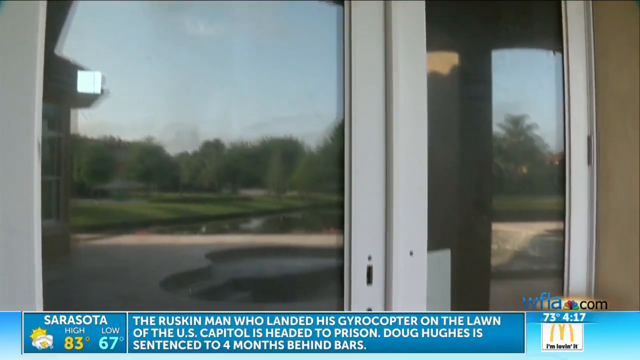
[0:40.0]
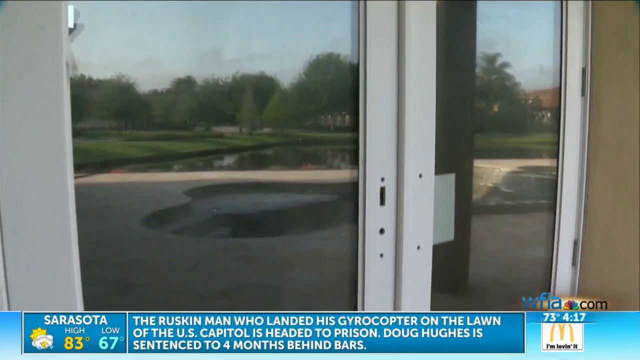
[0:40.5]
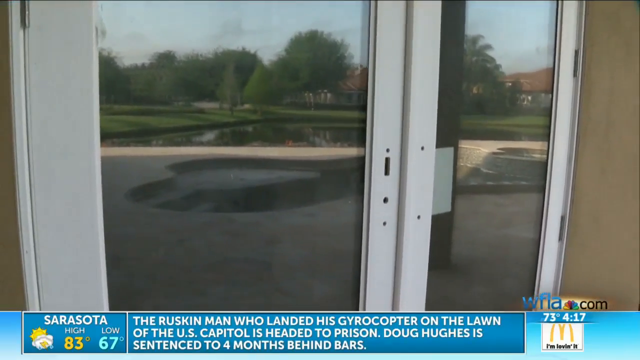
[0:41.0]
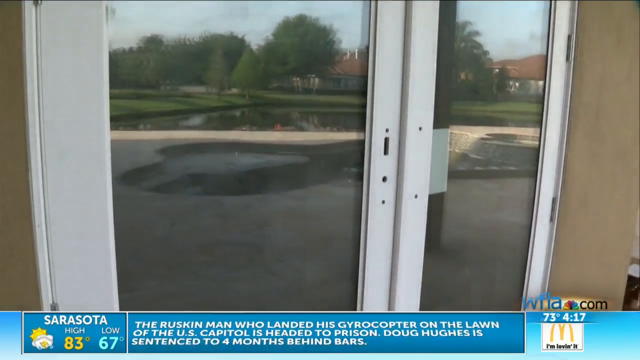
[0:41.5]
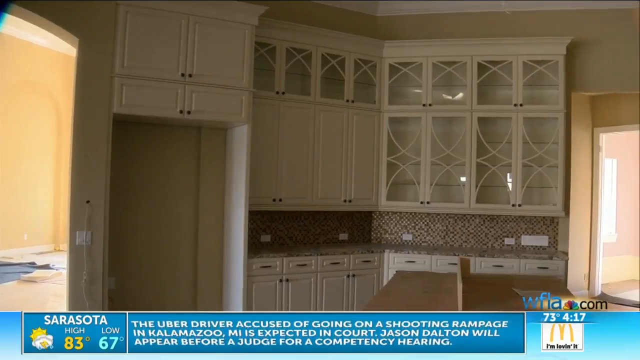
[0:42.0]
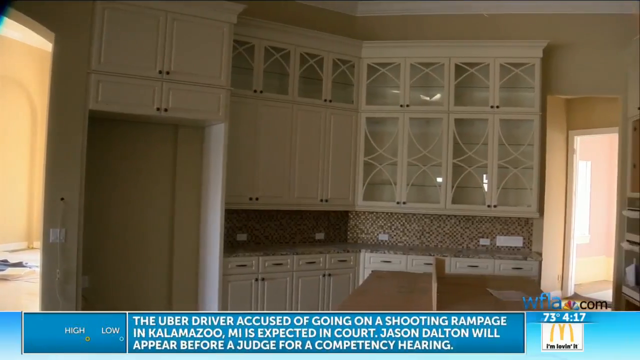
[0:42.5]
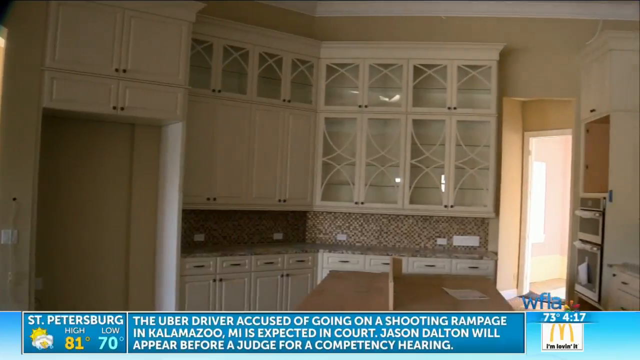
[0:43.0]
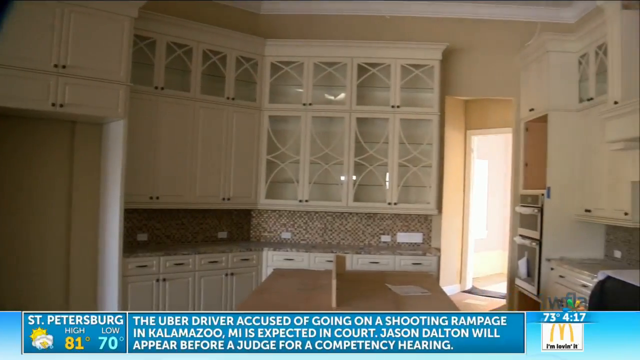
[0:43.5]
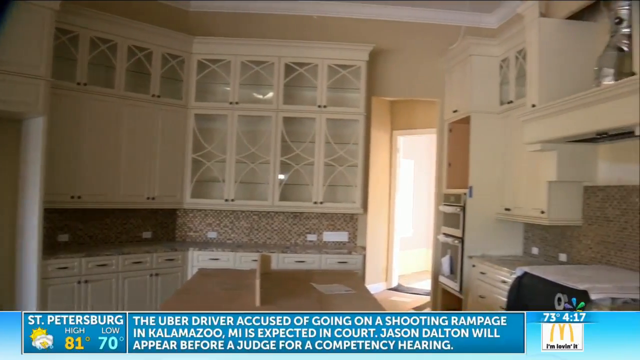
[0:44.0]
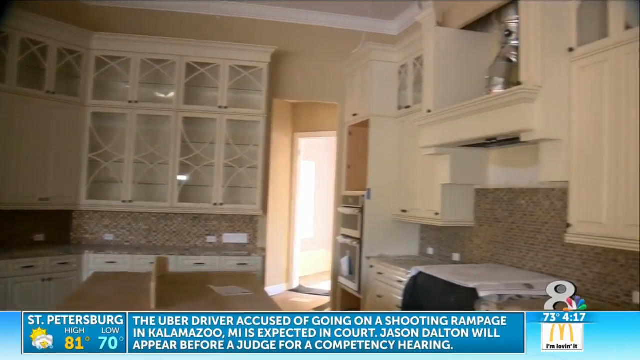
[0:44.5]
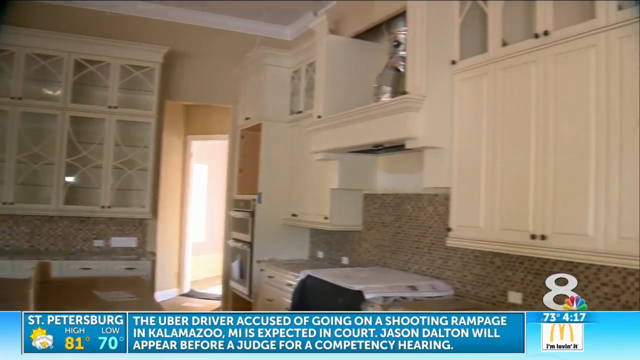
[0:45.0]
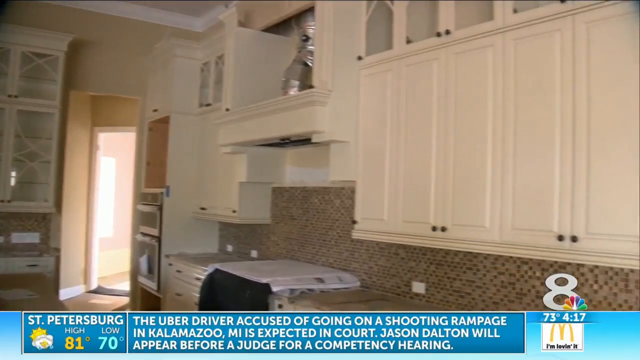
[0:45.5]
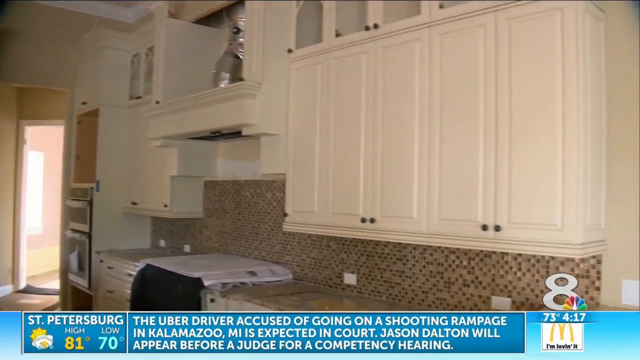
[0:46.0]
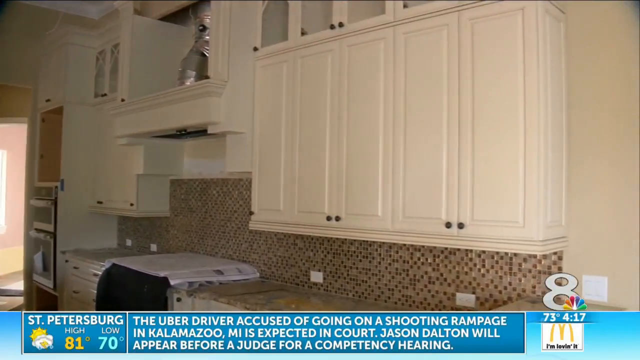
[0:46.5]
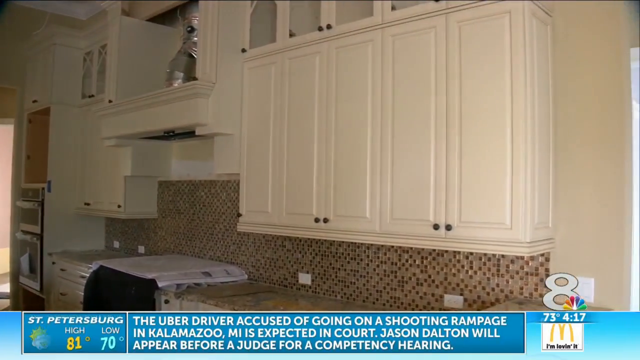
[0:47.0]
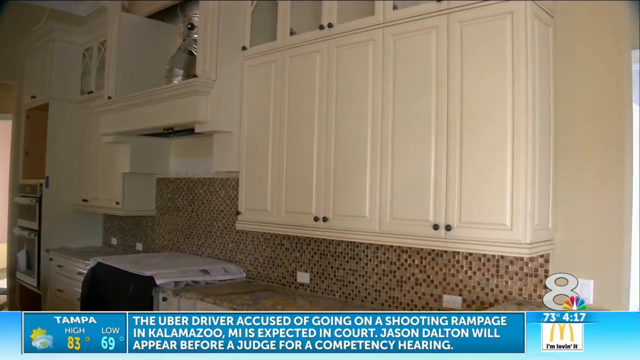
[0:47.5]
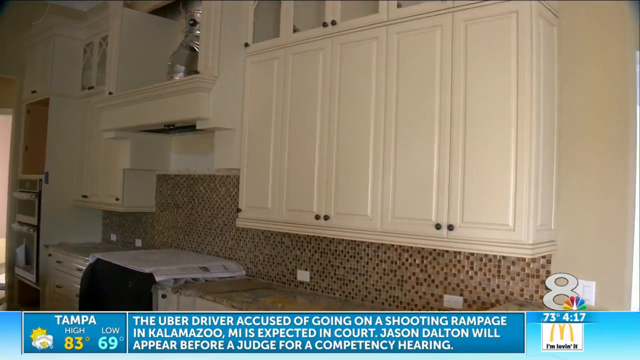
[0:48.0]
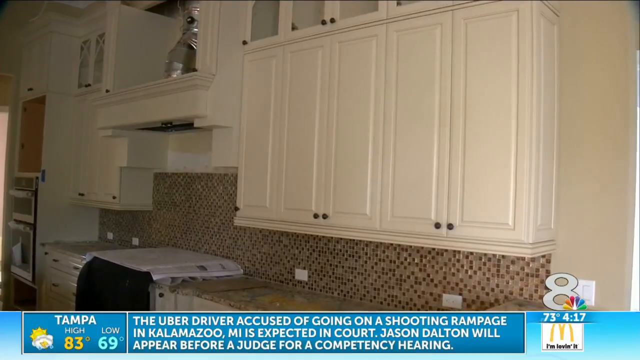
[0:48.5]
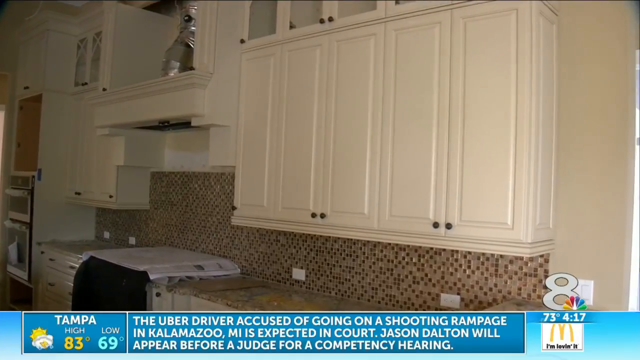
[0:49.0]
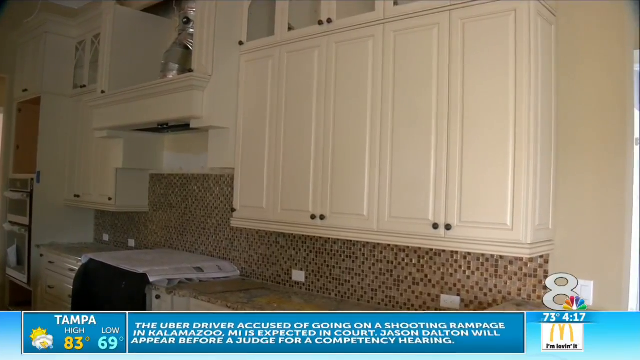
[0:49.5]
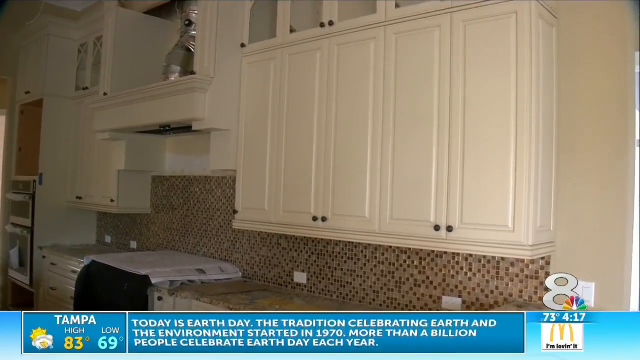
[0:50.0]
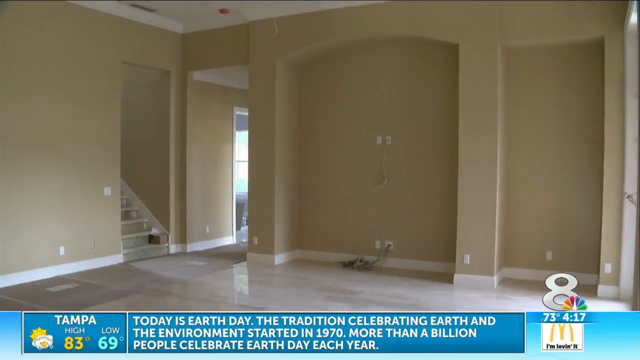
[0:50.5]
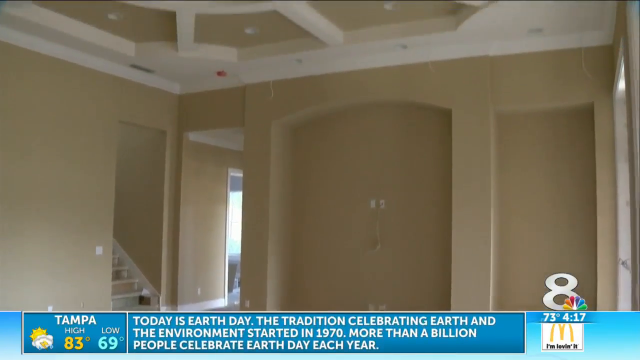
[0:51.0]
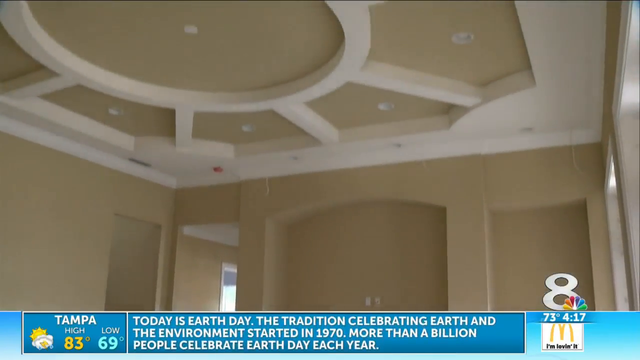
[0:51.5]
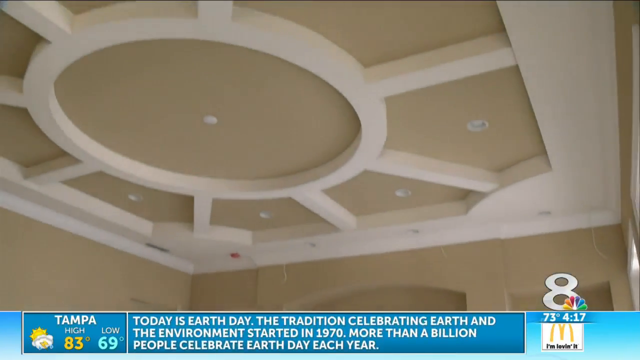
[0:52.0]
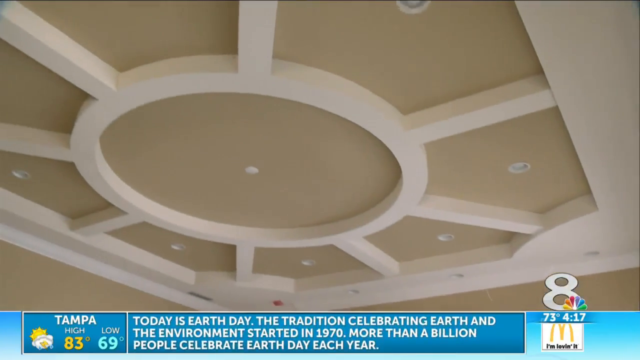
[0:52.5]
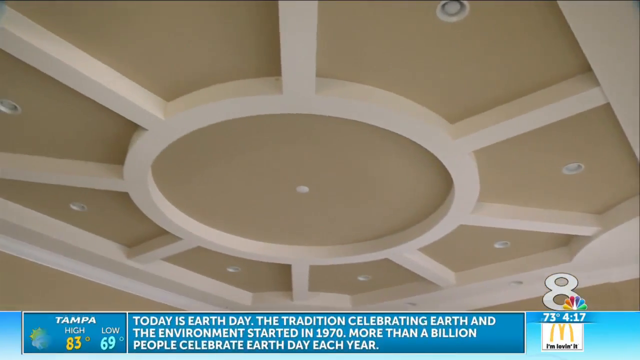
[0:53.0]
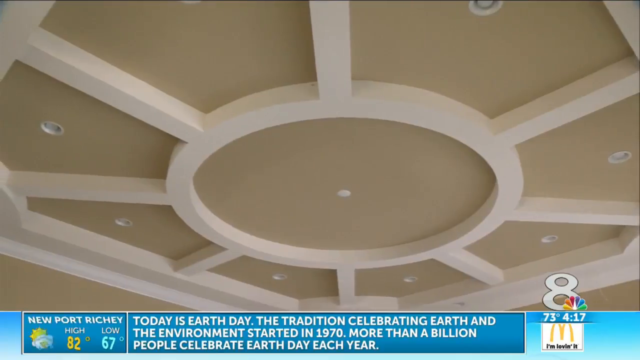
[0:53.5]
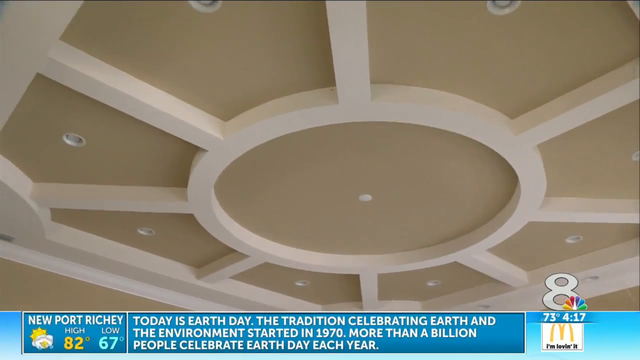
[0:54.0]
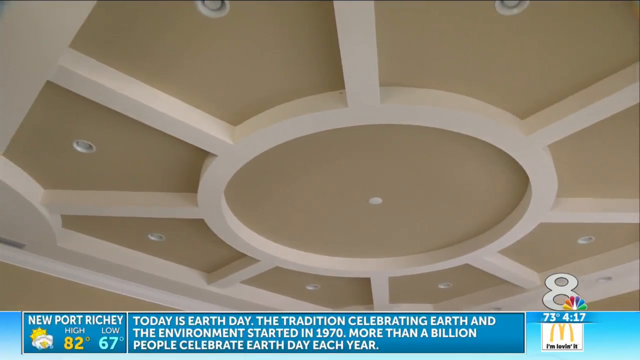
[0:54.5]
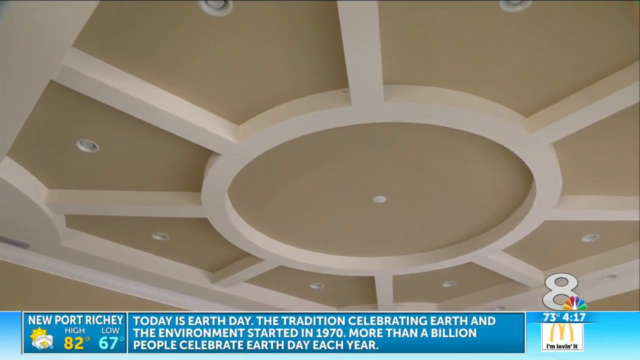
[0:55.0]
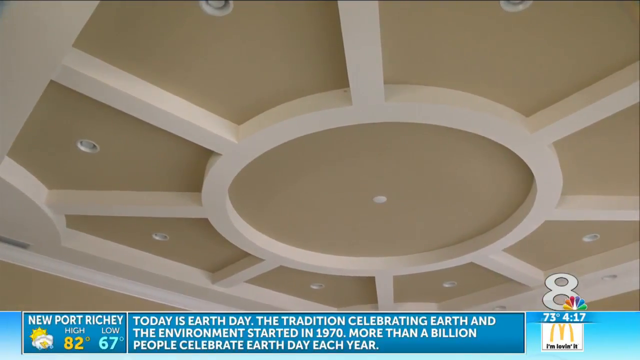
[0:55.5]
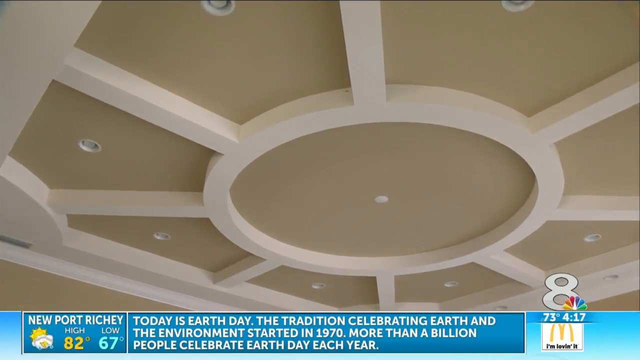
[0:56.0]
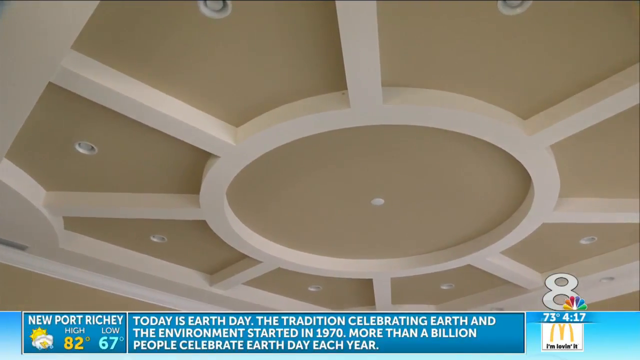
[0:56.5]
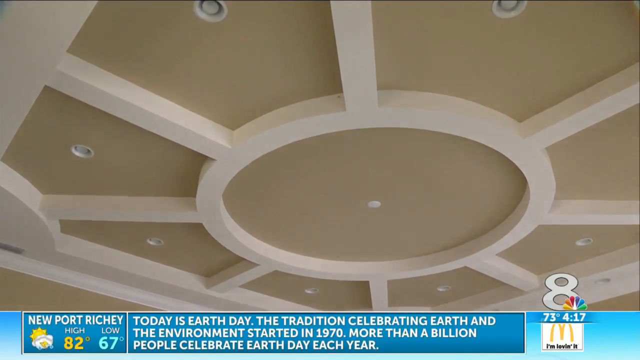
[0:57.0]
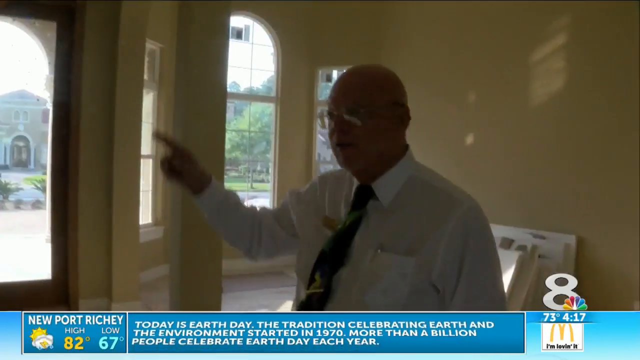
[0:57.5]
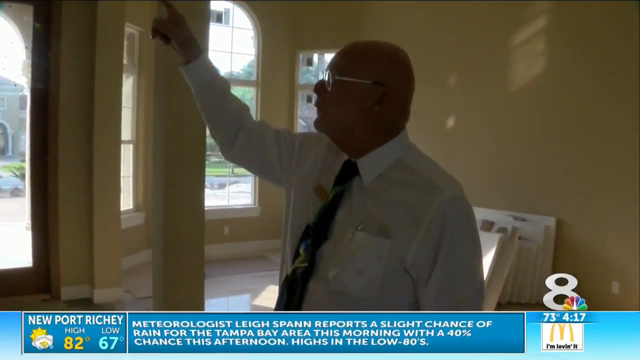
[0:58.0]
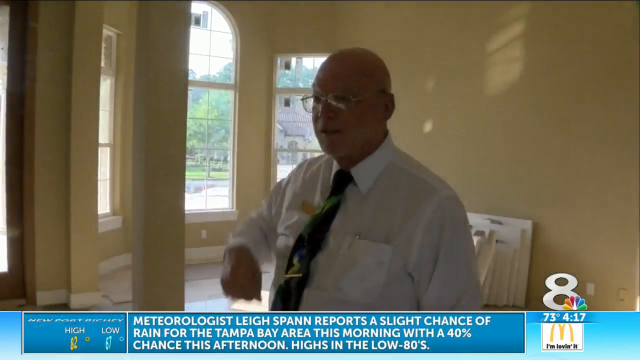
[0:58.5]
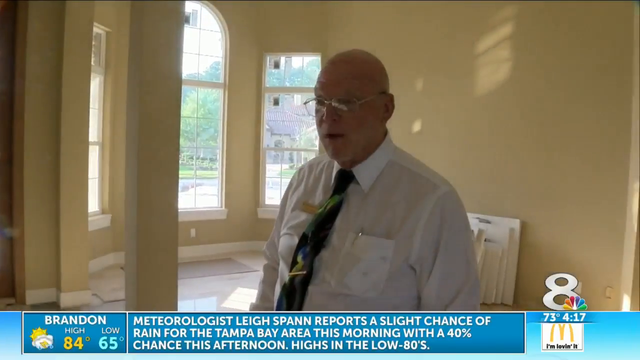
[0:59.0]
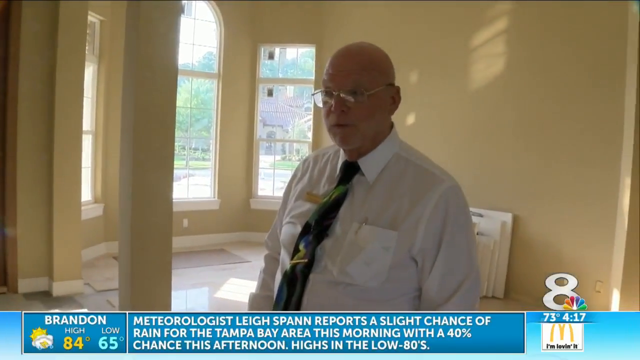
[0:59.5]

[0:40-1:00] The segment continues with a view of what look like sliding doors, which lead through into a porch area. The view then moves into the kitchen for an overall look: there are cabinets, more cabinets, and what looks like a silver statue at the top of the stove area. The stove has a black rag around the front of it. The interior is shown, with the ceiling shaped like a sun. A man points up at something, possibly at that ceiling.